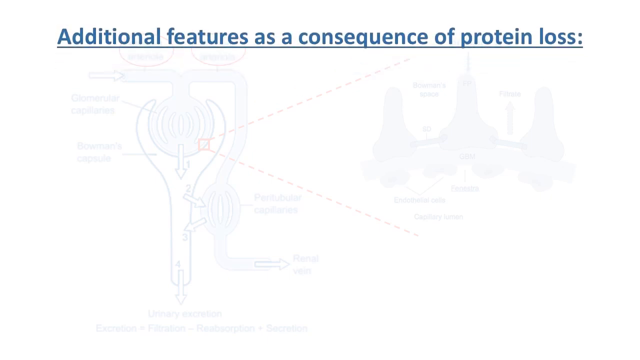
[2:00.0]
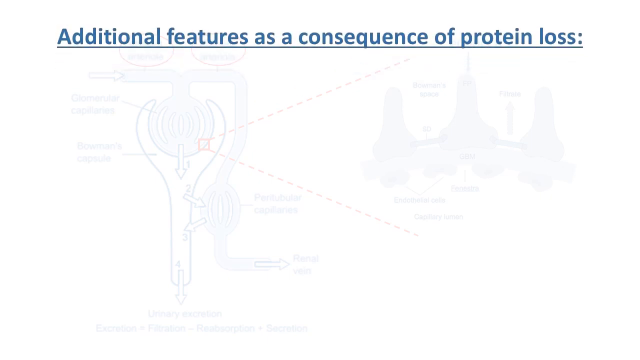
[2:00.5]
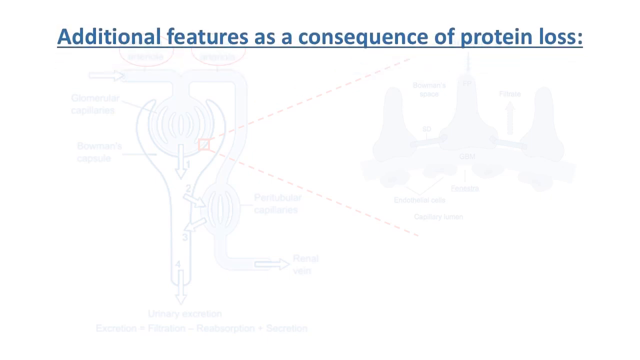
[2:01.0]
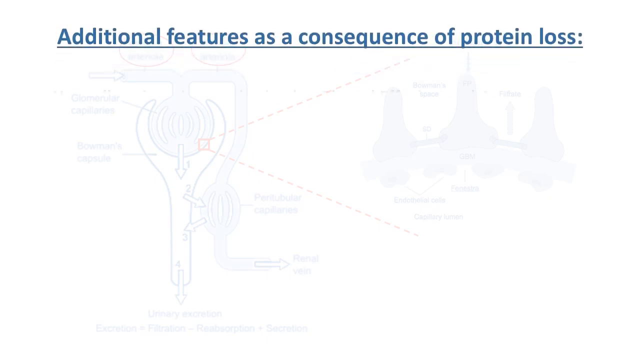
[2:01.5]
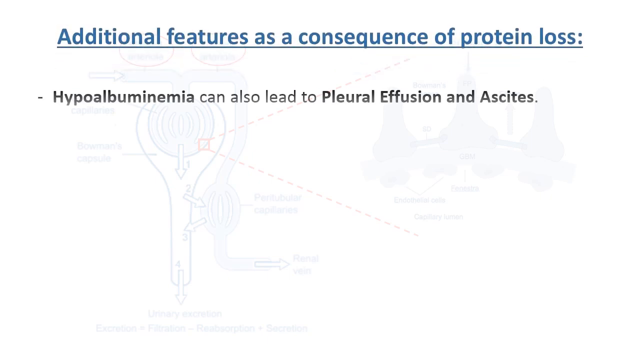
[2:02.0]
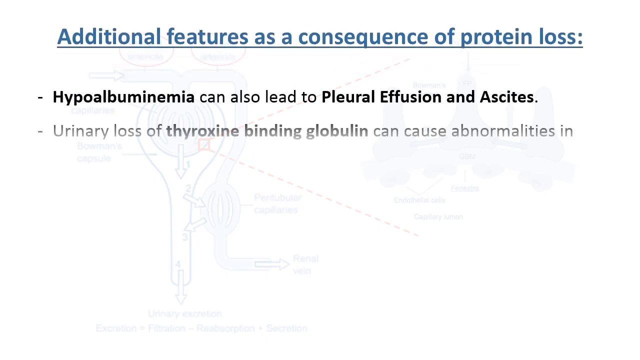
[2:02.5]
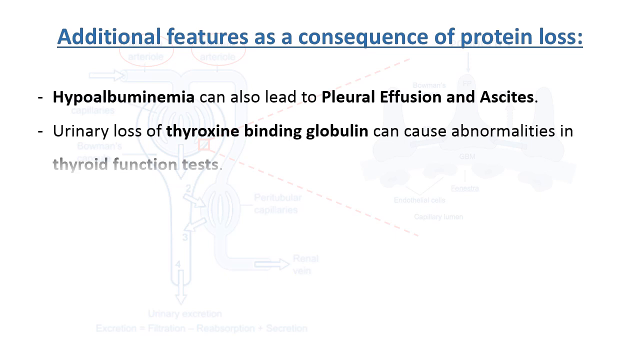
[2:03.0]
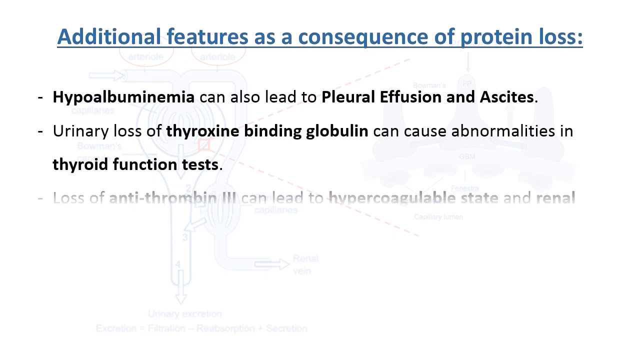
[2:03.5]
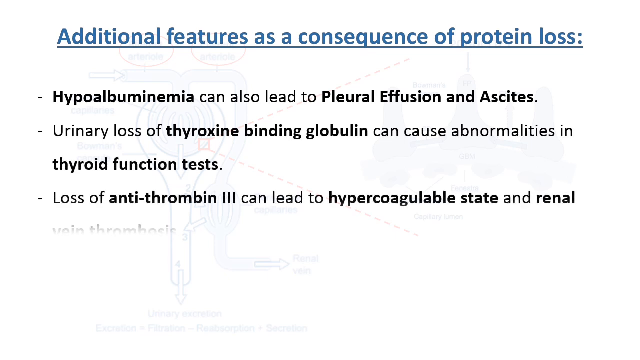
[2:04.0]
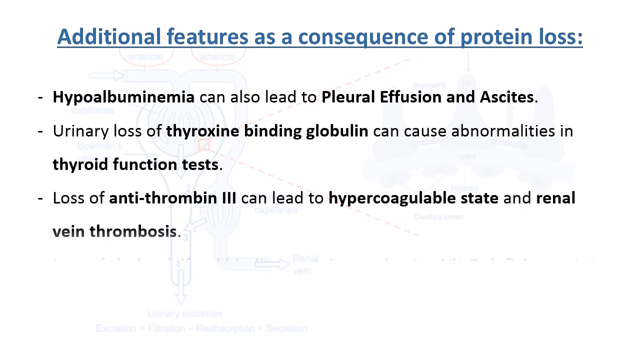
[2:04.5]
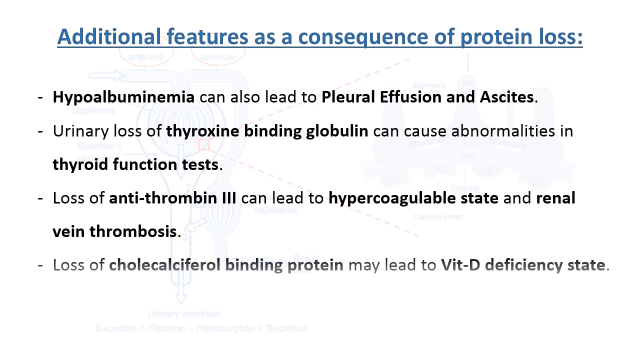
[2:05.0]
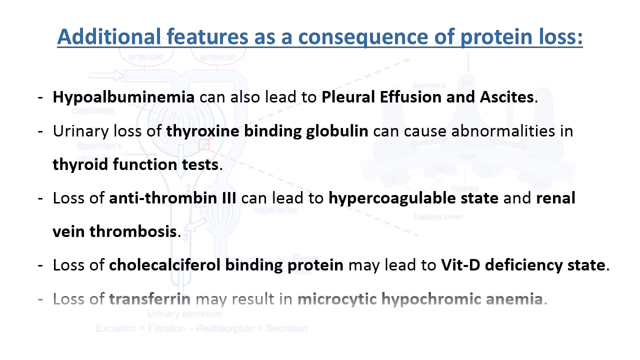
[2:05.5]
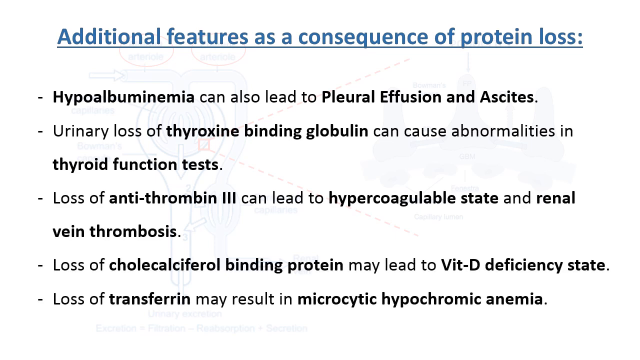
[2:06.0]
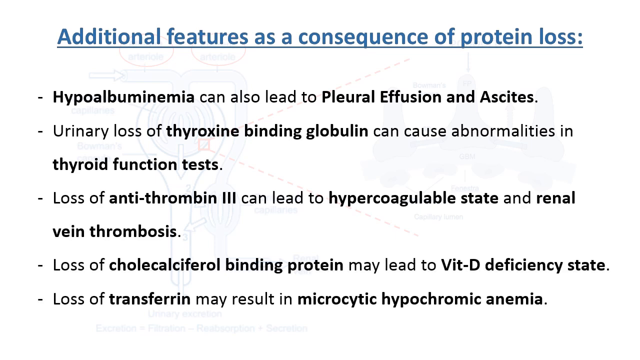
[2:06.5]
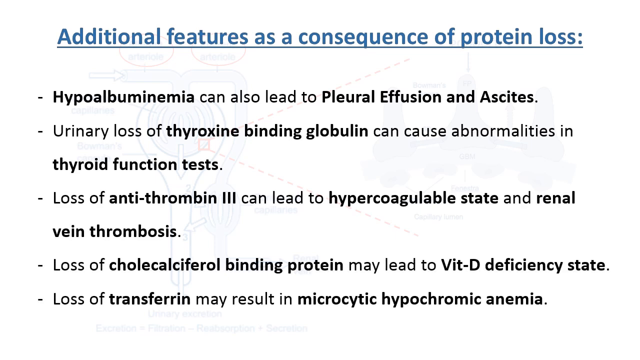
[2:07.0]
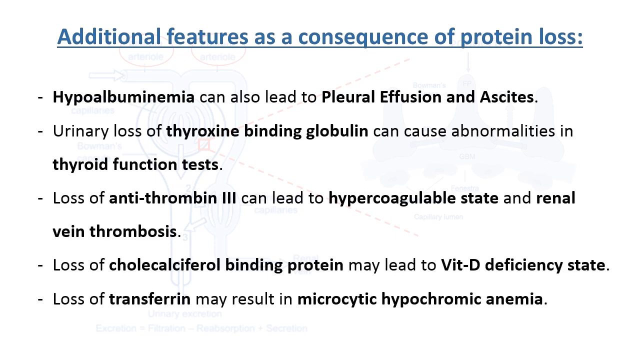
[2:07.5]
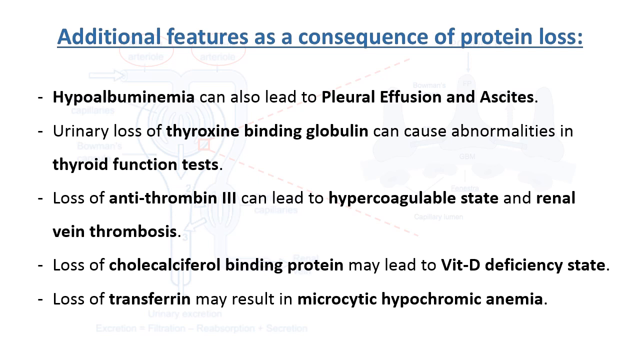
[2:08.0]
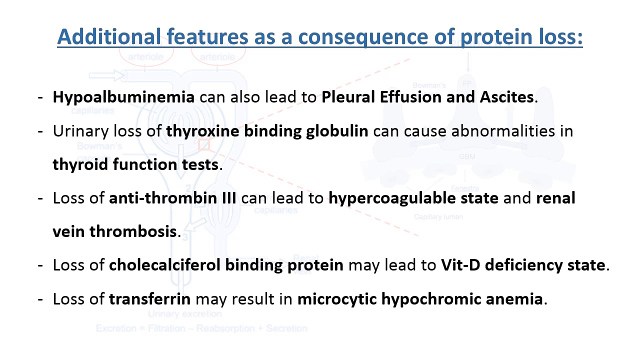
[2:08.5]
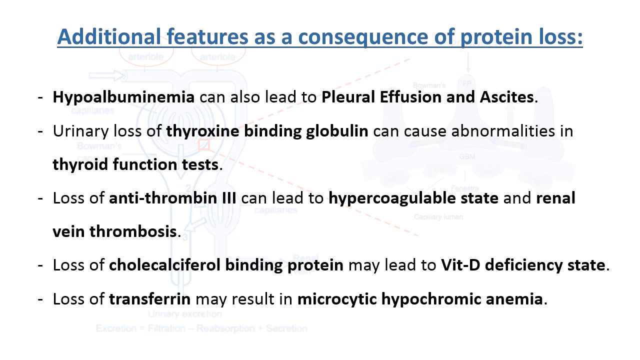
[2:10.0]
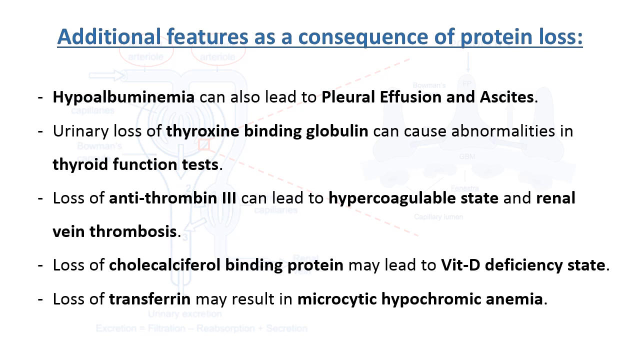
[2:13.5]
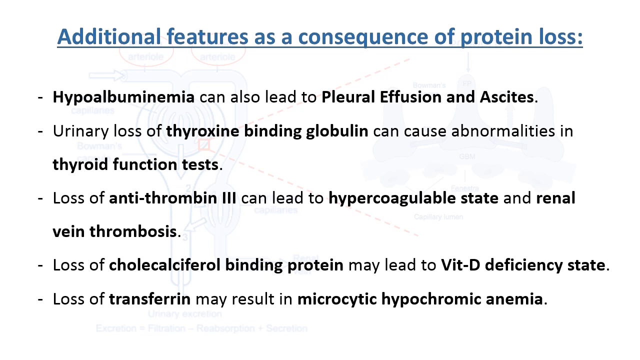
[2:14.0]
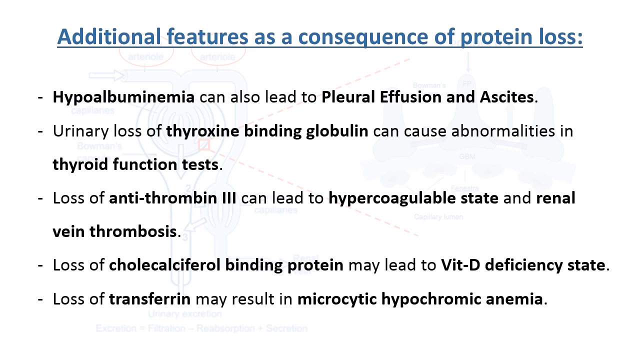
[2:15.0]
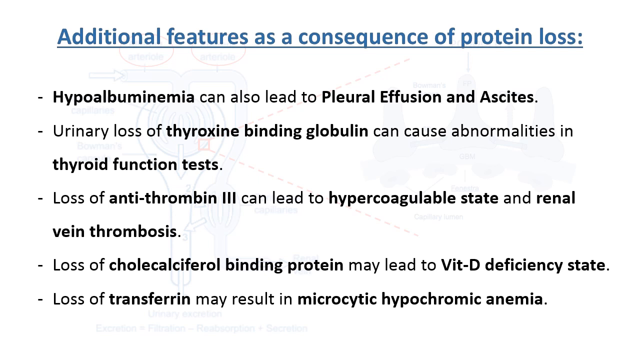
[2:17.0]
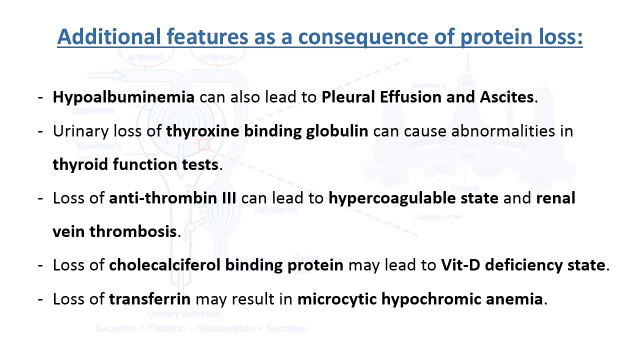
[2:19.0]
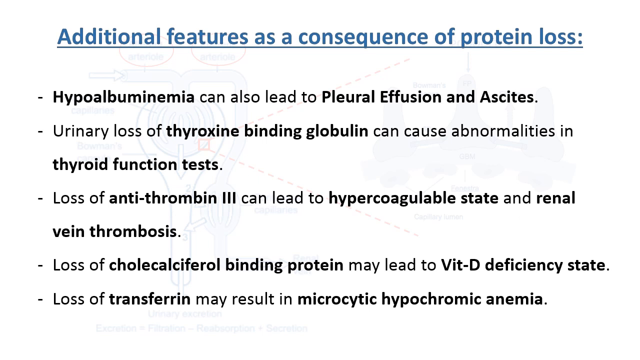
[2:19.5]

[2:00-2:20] The white background shows a faint image of the original diagram. Centered at the top, in blue underlined text, is "additional features as a consequence of protein loss". Black text quickly spells out the features as bullet points: "hypoalbuminemia can also lead to pleural effusion and ascites", "urinary loss of thyroxine-binding globulin can cause abnormalities in thyroid function tests", "loss of antithrombin-3 can lead to hypercoagulable state and renal vein thrombosis", "loss of cholecalciferol-binding protein may lead to VIT-D deficiency state", and "loss of transferrin may result in microcytic hypochromic anemia". Several words throughout the bullet points are bolded: hypoalbuminemia, pleural effusion and ascites, thyroxin-binding globulin, thyroid function tests, antithrombin-3, hypercoagulable state, renal vein thrombosis, cholecalciferol binding protein, VIT-D deficiency state, transferrin, and microcytic hypochromic anemia.